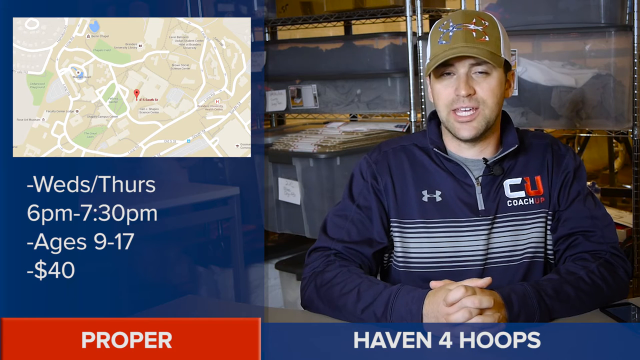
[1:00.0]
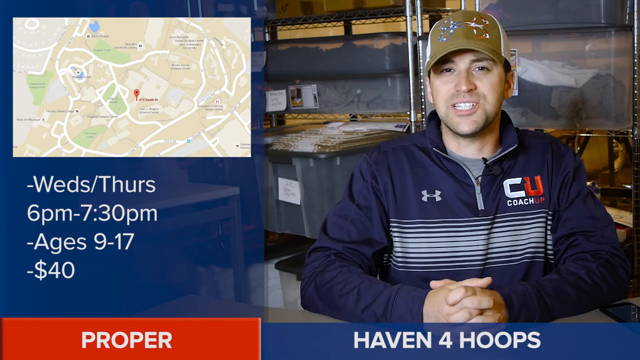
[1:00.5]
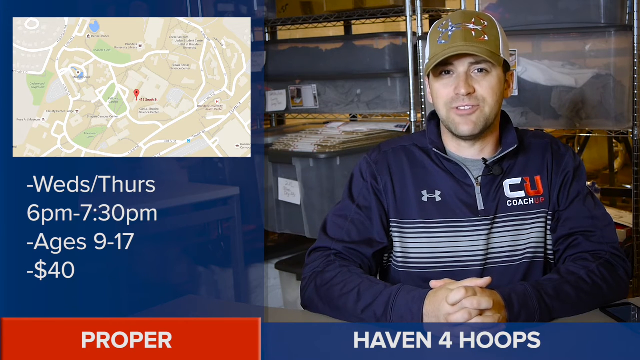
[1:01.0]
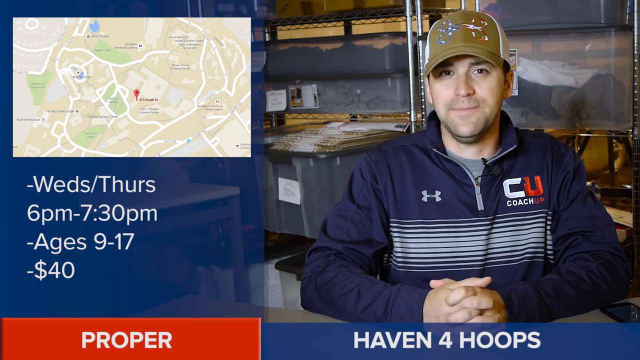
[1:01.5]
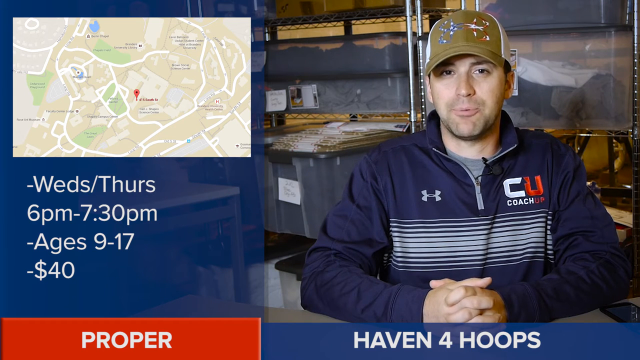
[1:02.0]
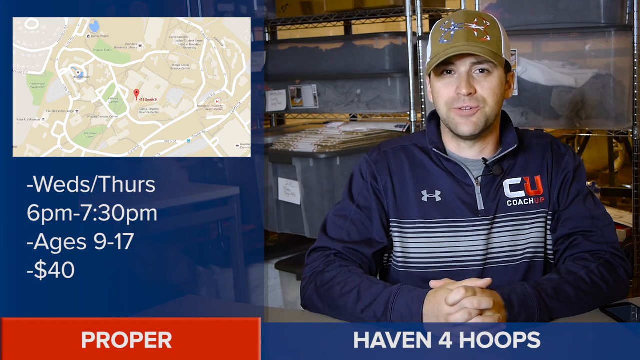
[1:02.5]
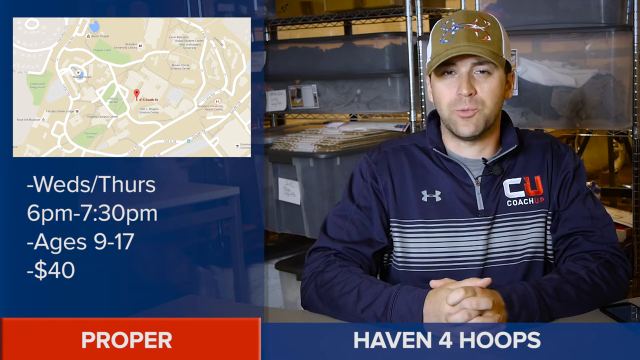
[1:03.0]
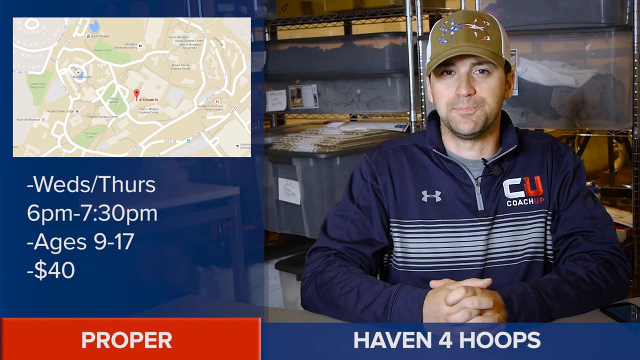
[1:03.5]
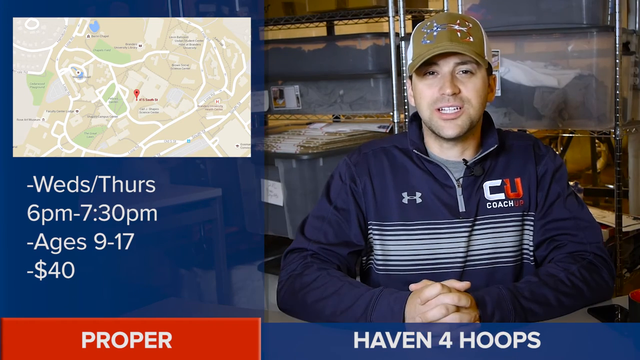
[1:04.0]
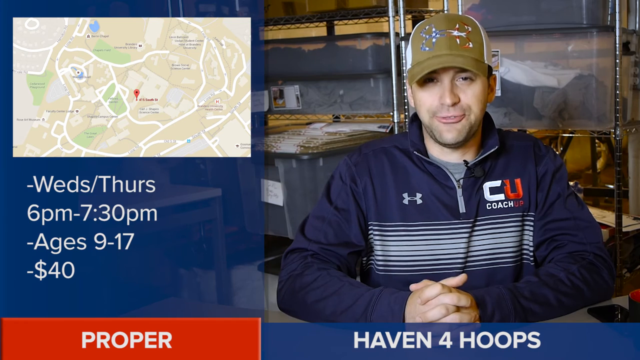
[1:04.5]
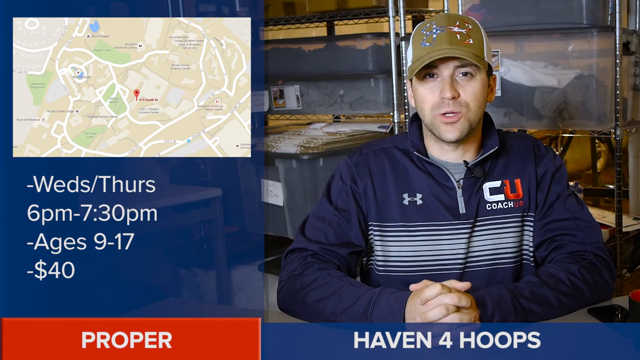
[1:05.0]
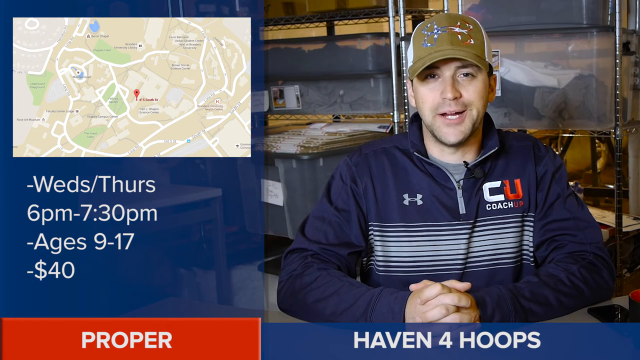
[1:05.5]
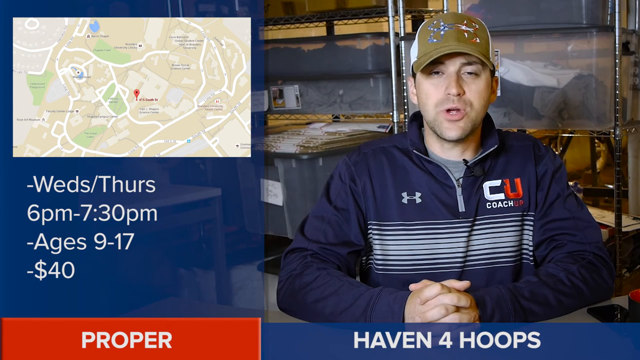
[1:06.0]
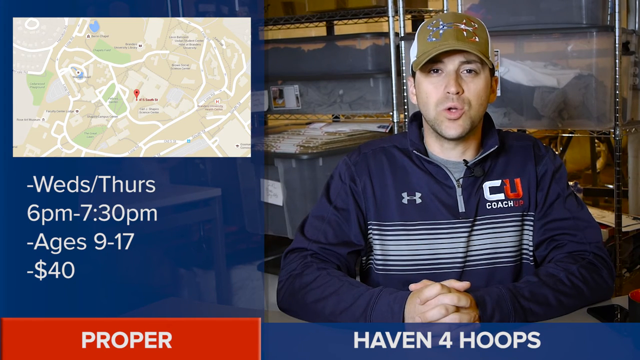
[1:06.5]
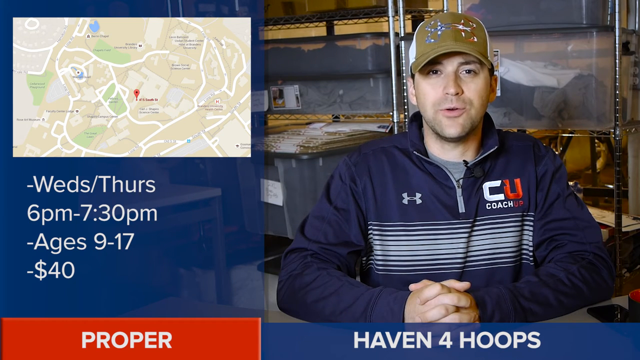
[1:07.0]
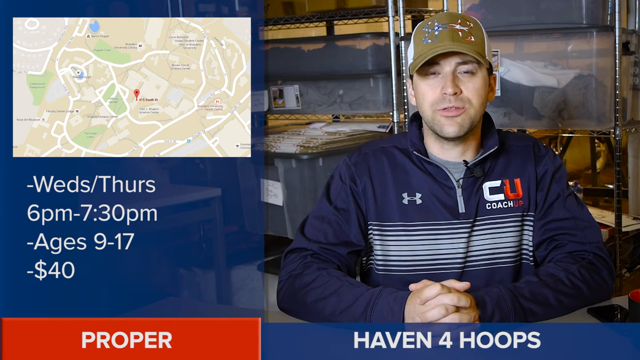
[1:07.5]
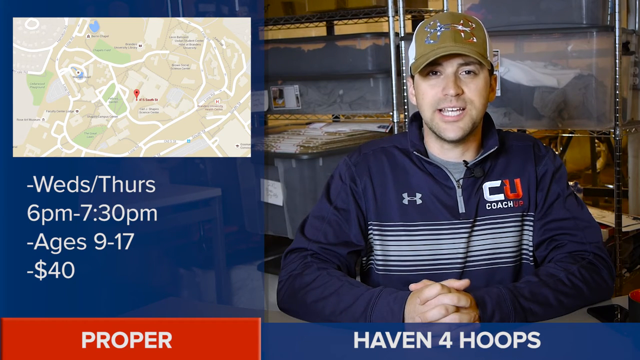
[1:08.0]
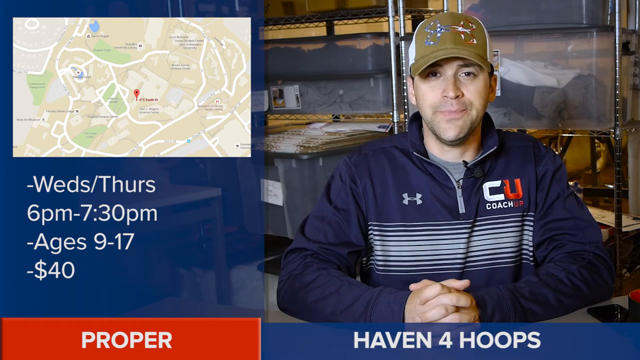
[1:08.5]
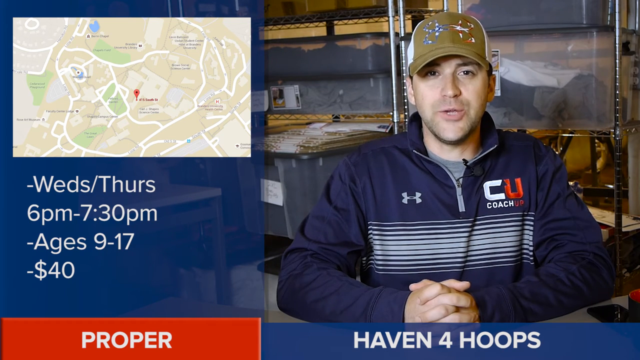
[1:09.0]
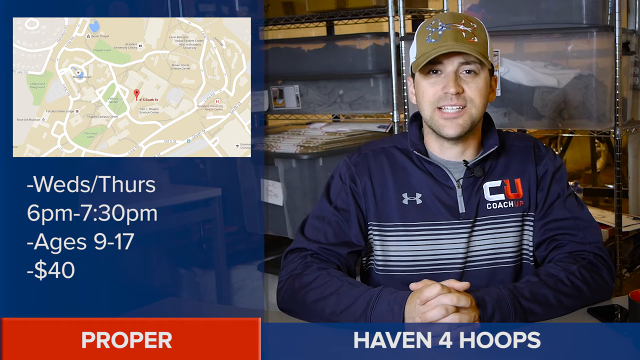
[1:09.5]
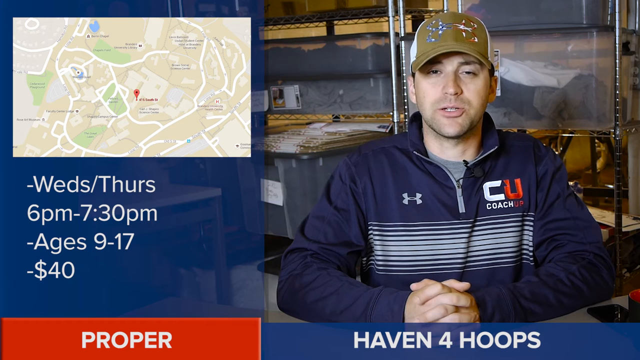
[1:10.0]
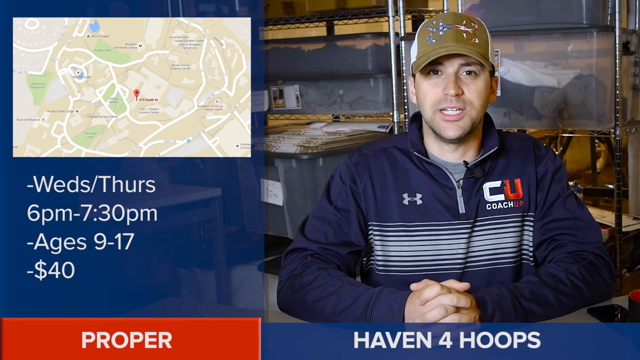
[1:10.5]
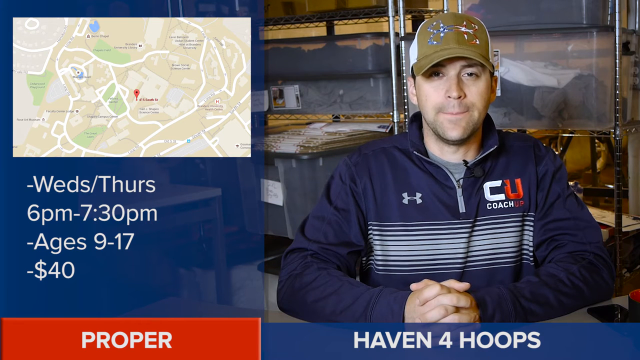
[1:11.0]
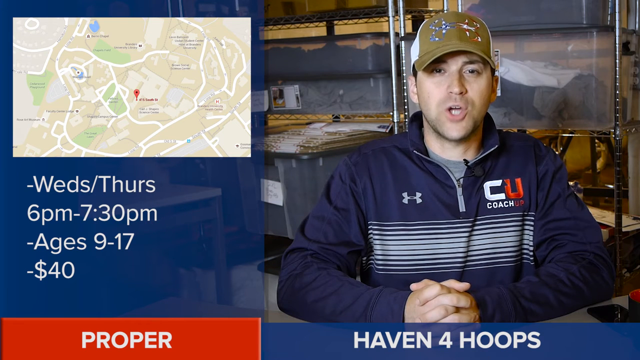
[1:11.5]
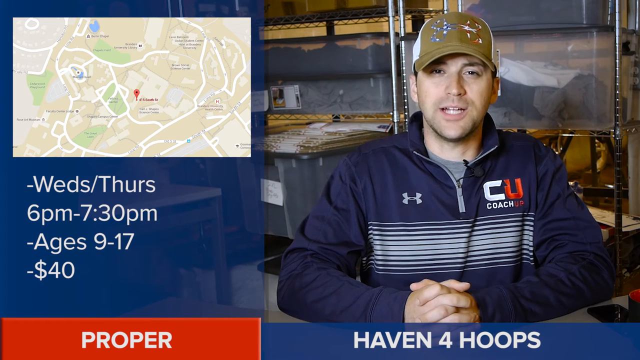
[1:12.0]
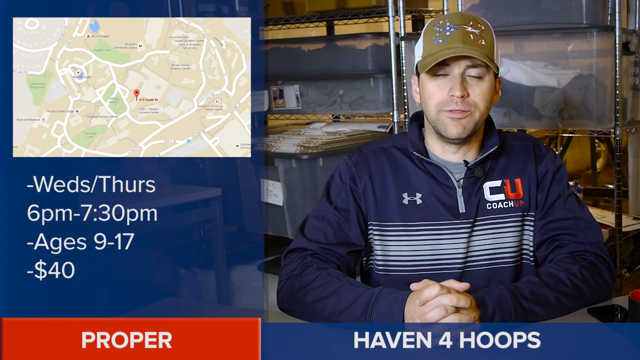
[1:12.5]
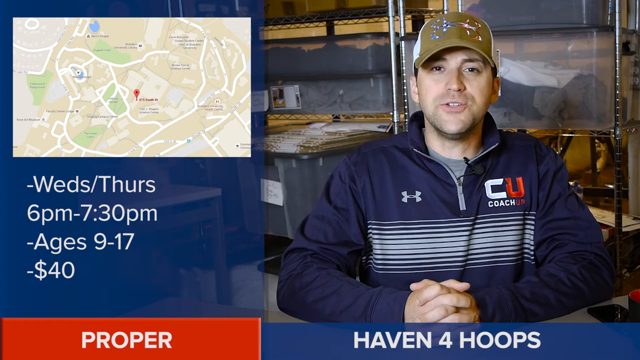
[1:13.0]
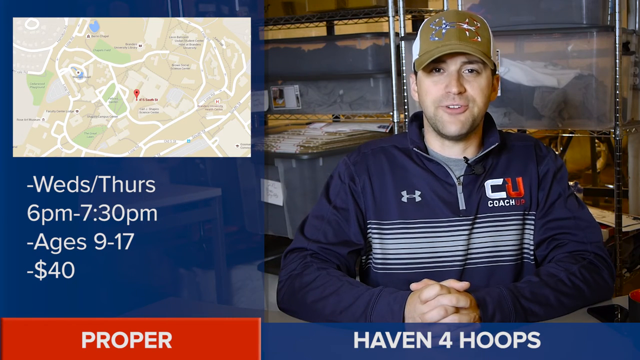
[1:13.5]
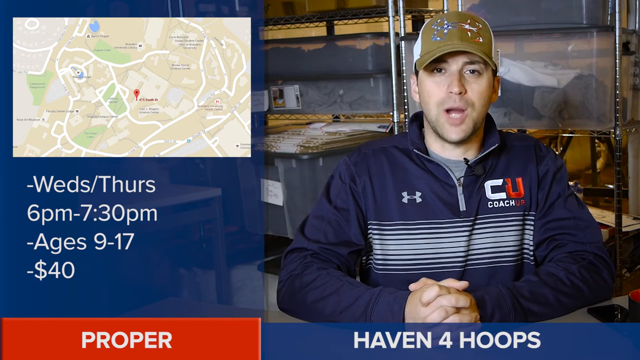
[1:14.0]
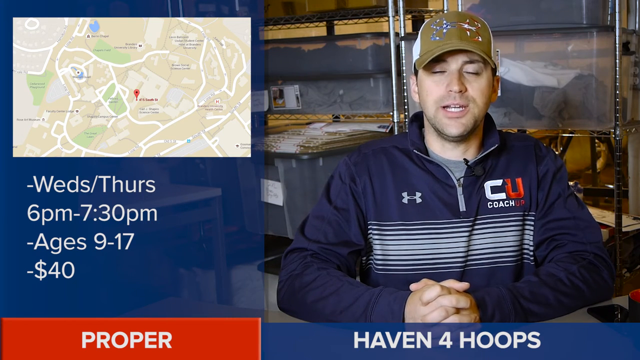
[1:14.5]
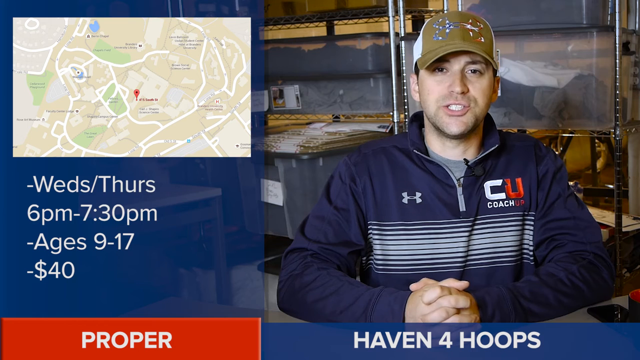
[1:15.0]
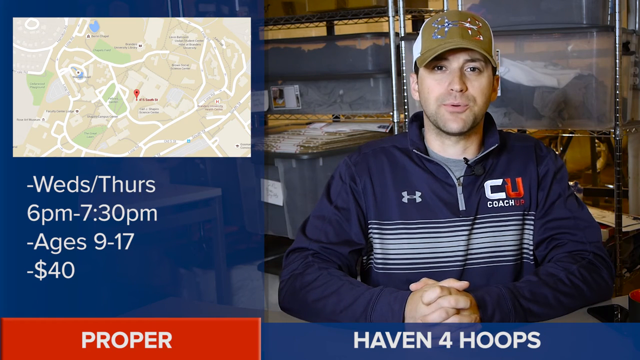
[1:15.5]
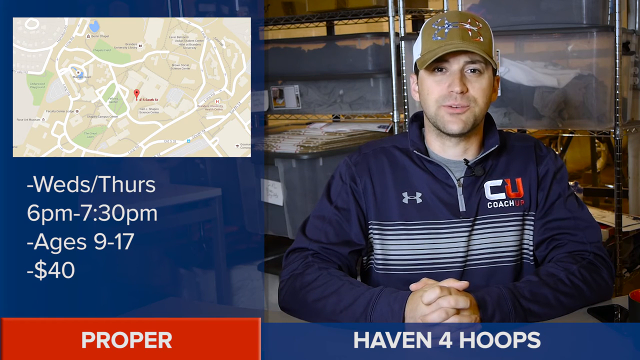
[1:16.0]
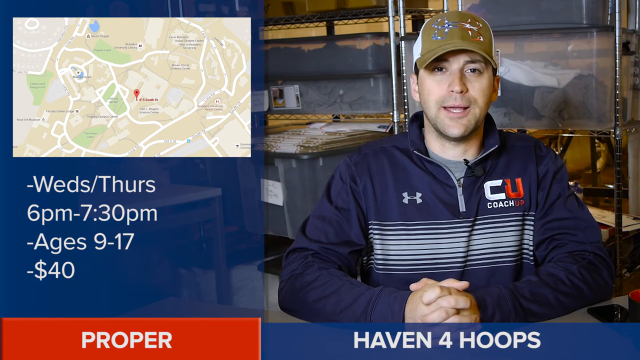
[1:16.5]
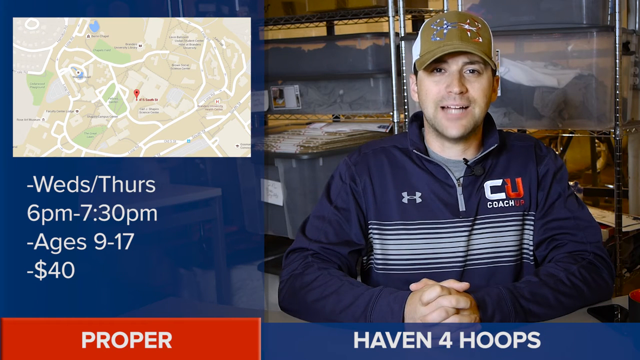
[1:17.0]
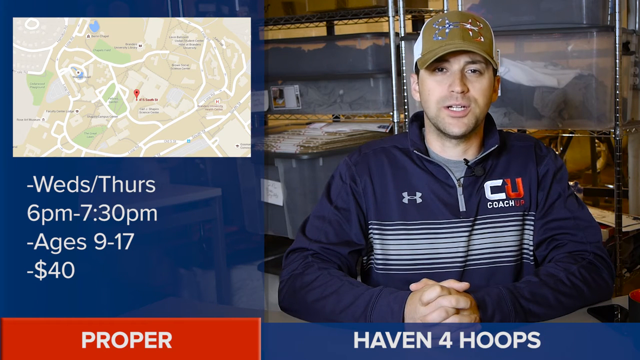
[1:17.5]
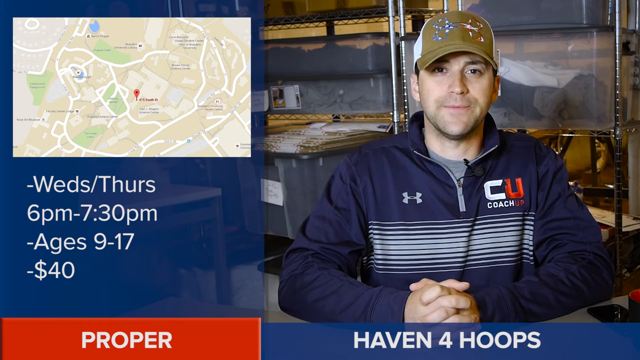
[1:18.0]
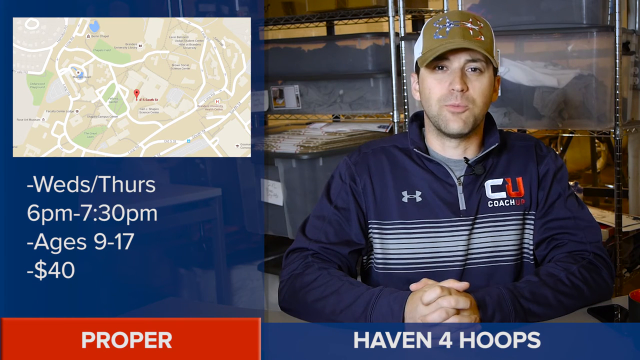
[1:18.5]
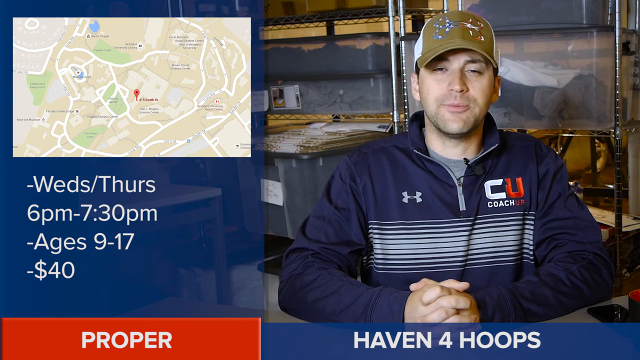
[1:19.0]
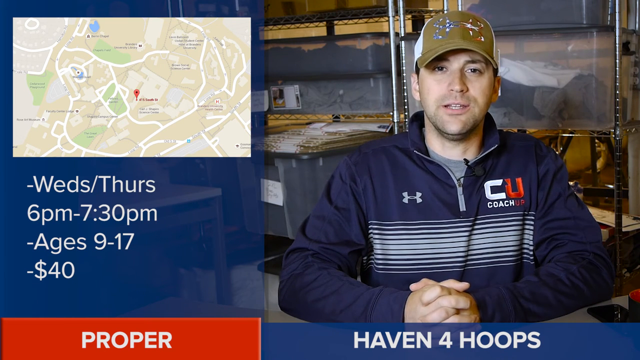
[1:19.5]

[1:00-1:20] A man talks on camera. On the left of the screen is a Google map with a red pin in the center marking a location, and underneath it the text reads "Wednesday and Thursday, 6 p.m. to 7.30 p.m., ages nine to 17, $40." He wears a blue sweatshirt with white stripes going horizontally across the middle, and above them it says "coach" underneath the logo. He wears a tannish colored hat with some type of logos on the front. The room appears to be maybe a garage or storage area, with clear storage totes stacked up on shelves behind him, each holding what looks like garments. He is apparently offering coaching services to the public.